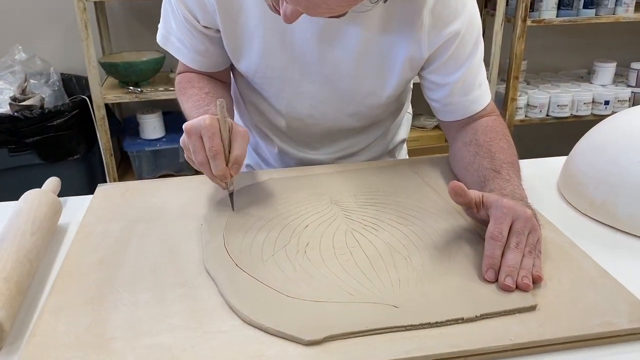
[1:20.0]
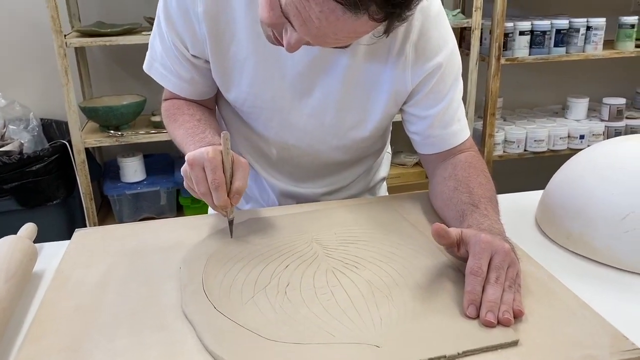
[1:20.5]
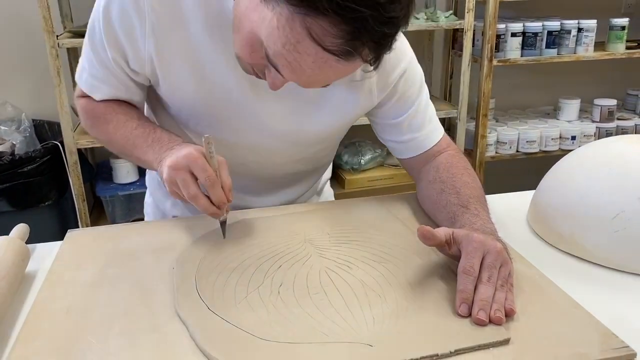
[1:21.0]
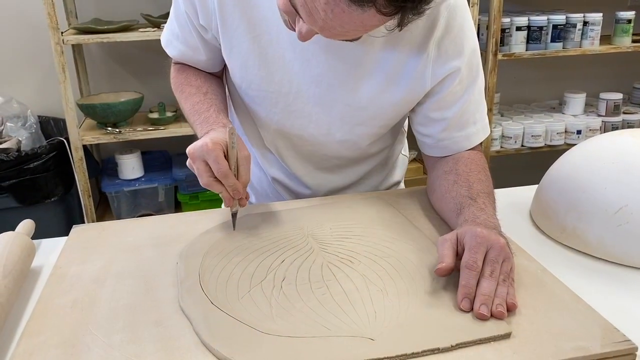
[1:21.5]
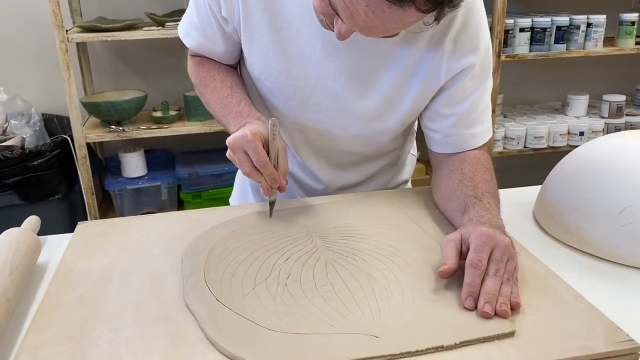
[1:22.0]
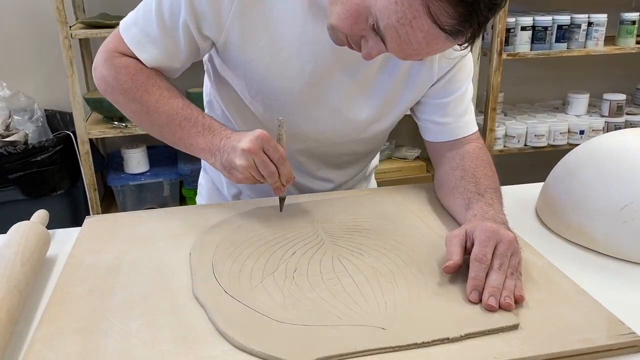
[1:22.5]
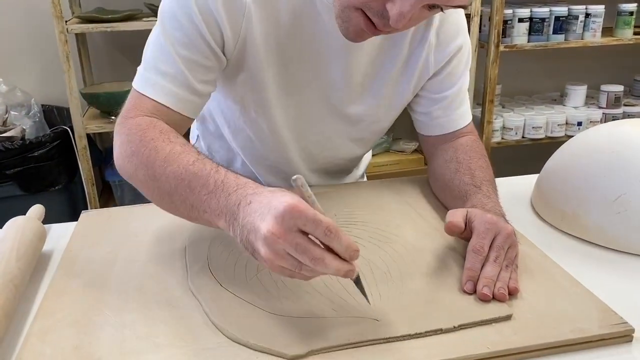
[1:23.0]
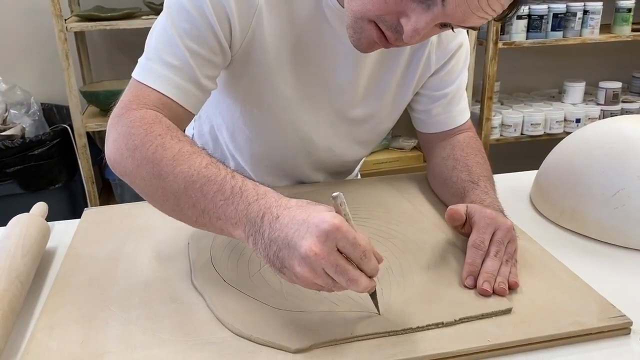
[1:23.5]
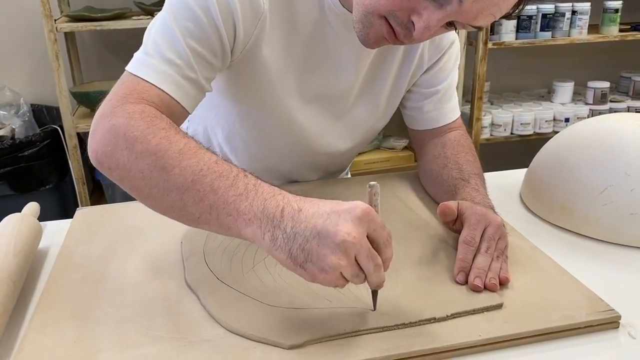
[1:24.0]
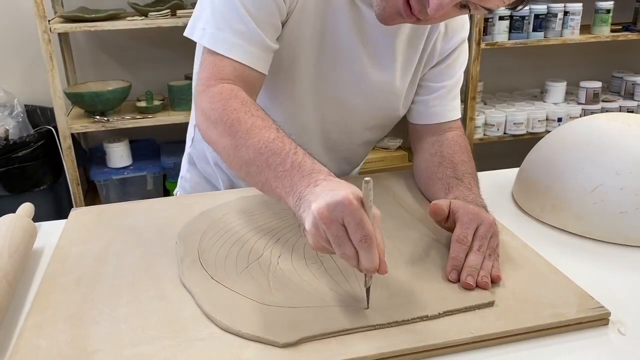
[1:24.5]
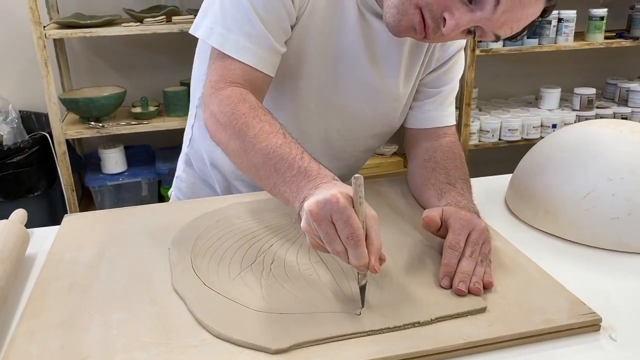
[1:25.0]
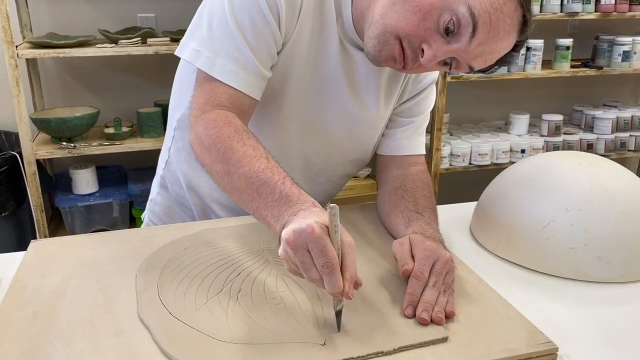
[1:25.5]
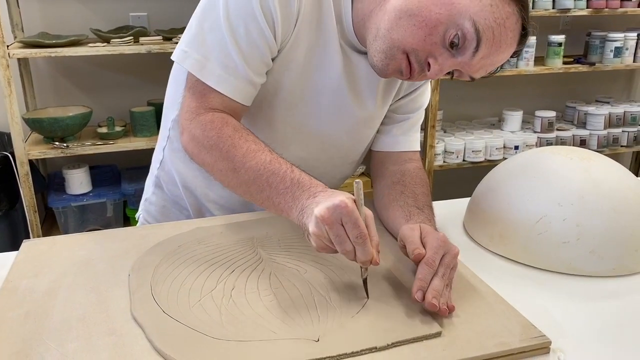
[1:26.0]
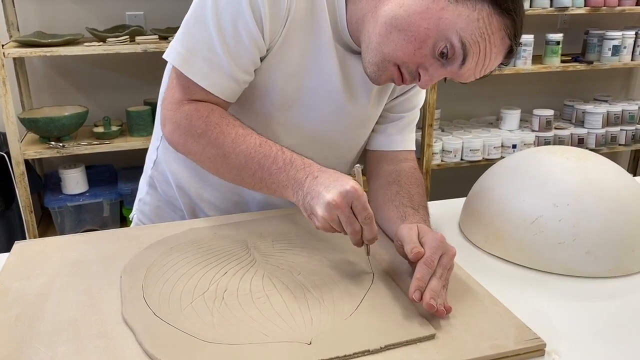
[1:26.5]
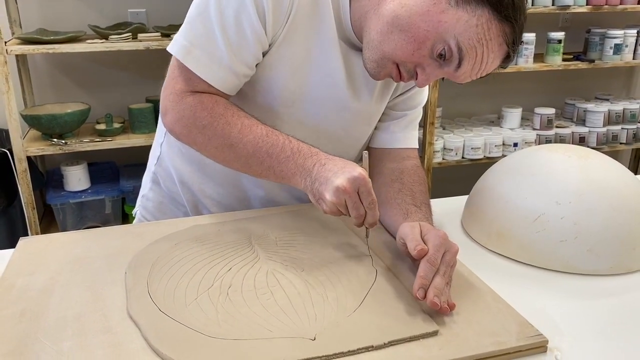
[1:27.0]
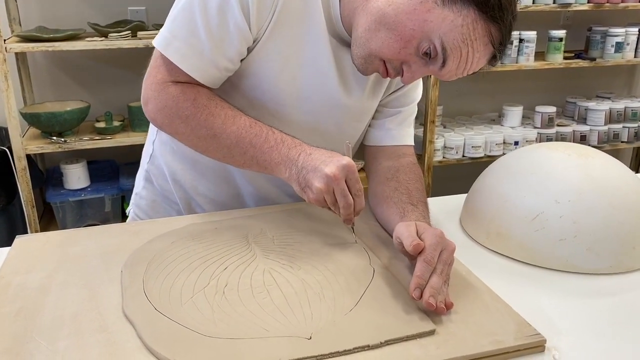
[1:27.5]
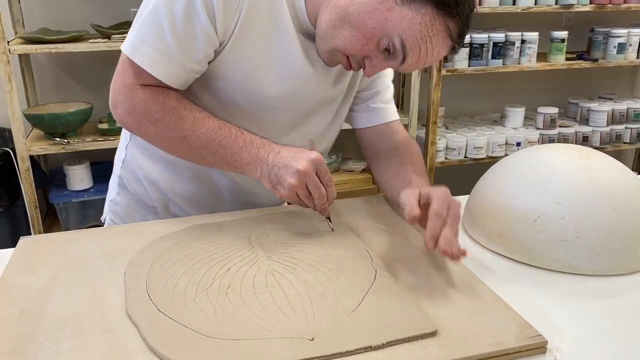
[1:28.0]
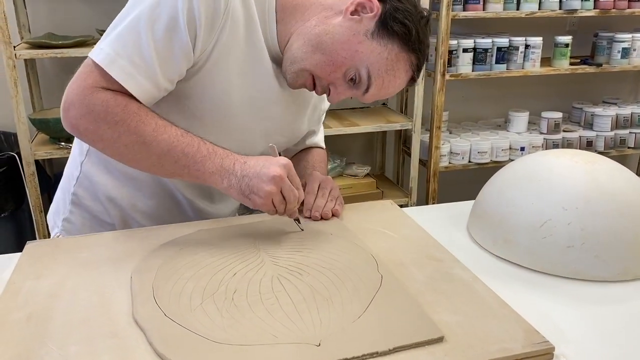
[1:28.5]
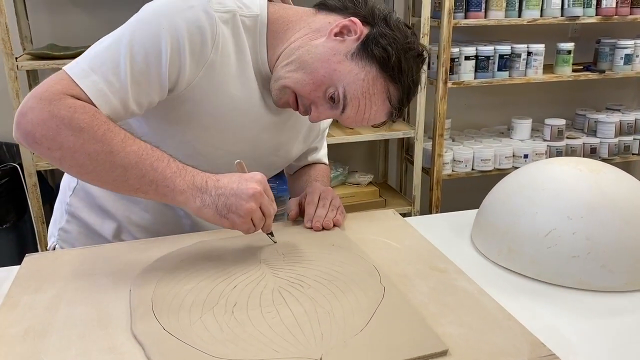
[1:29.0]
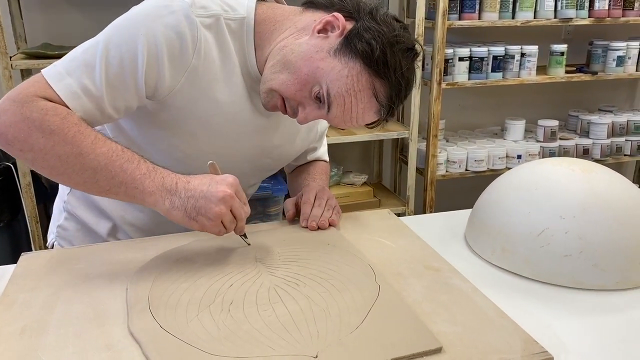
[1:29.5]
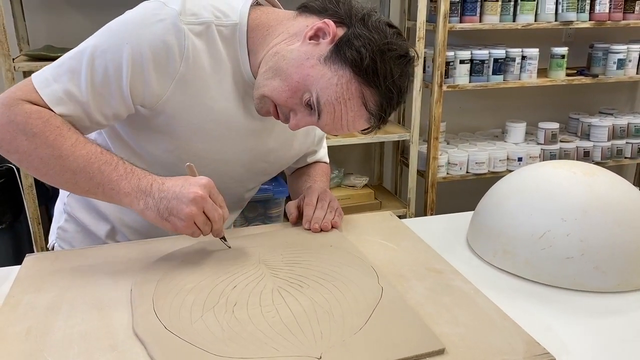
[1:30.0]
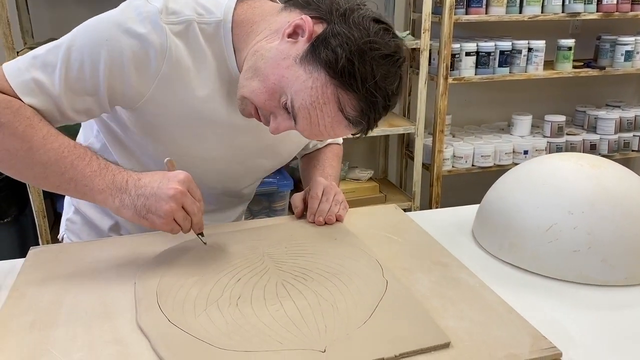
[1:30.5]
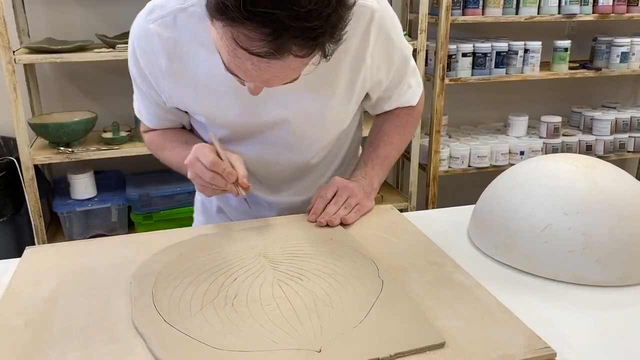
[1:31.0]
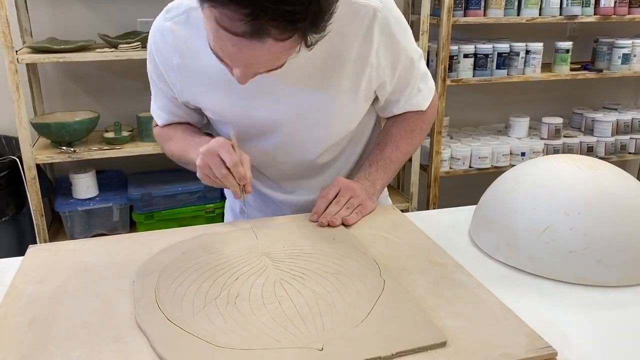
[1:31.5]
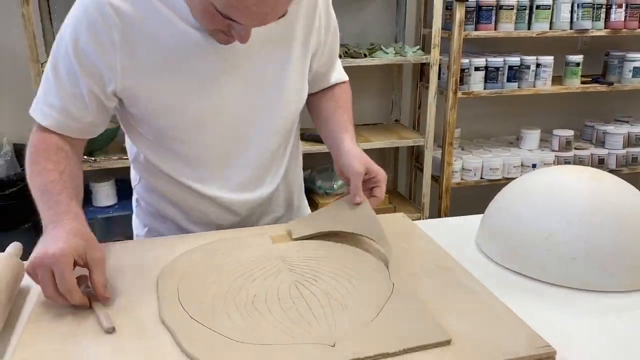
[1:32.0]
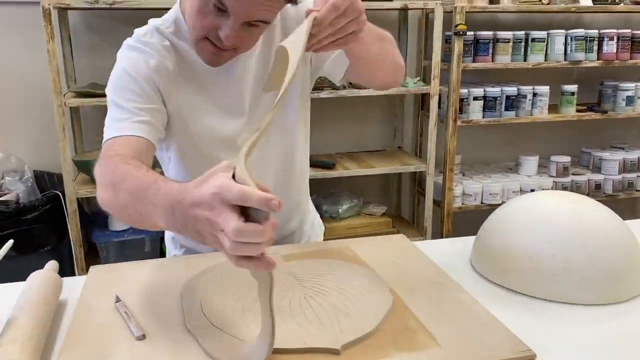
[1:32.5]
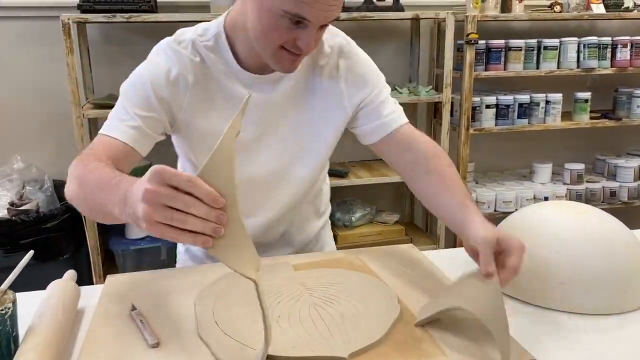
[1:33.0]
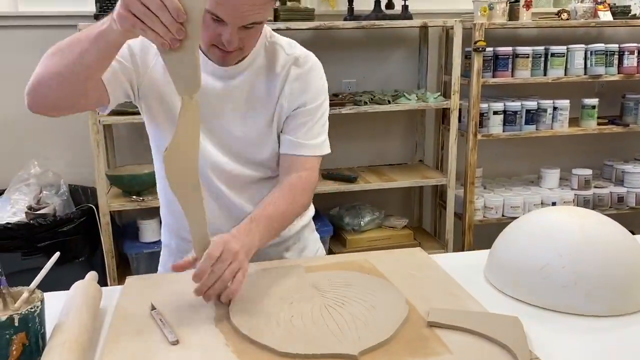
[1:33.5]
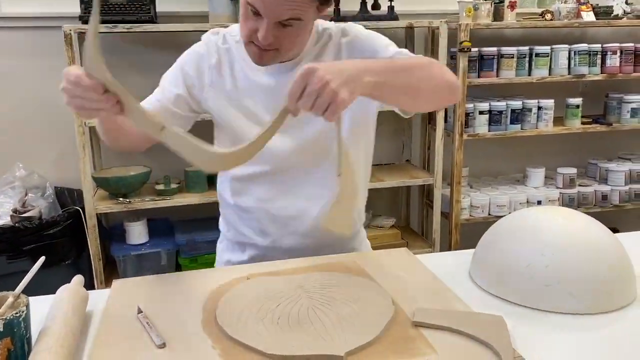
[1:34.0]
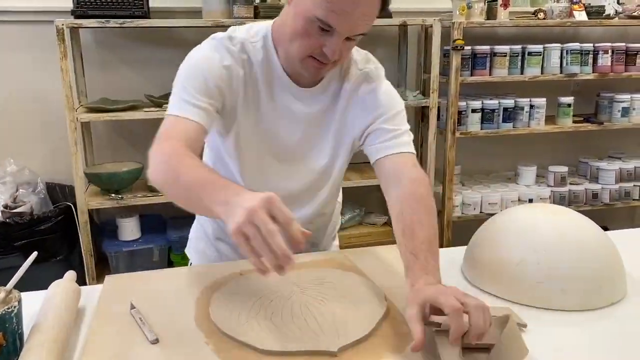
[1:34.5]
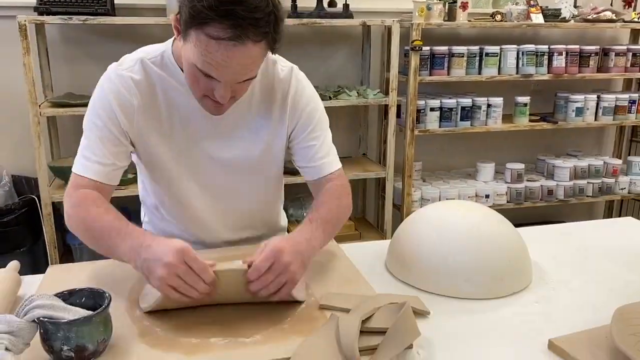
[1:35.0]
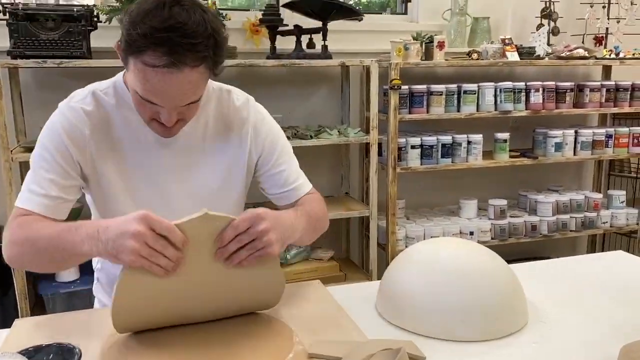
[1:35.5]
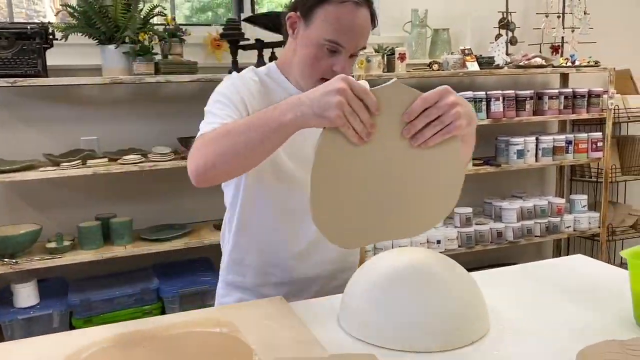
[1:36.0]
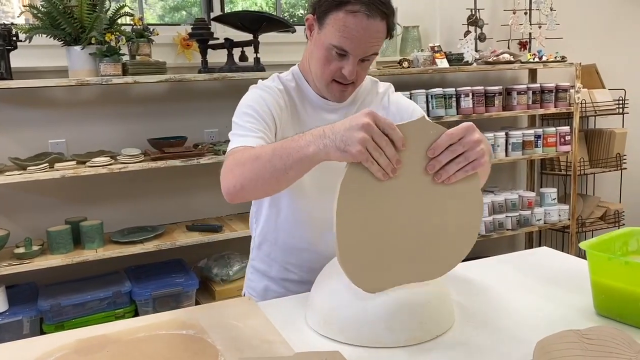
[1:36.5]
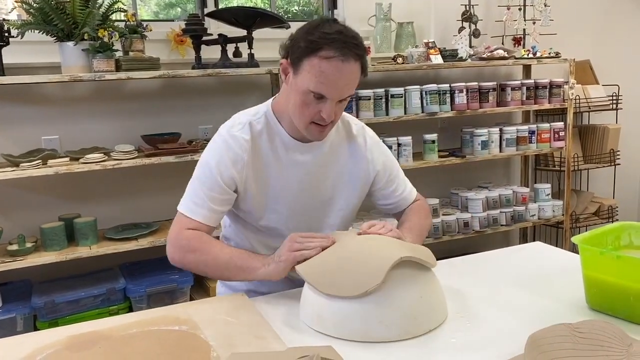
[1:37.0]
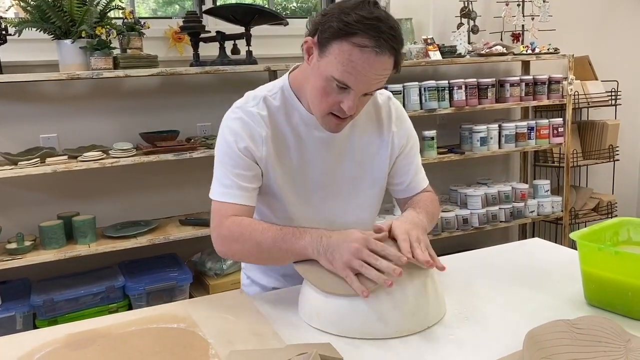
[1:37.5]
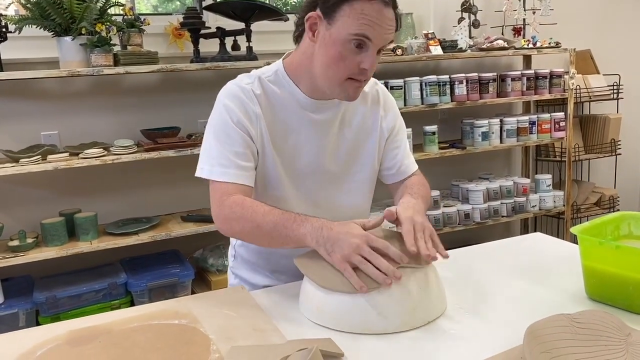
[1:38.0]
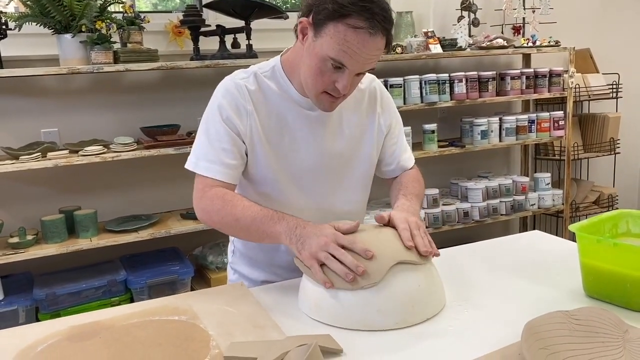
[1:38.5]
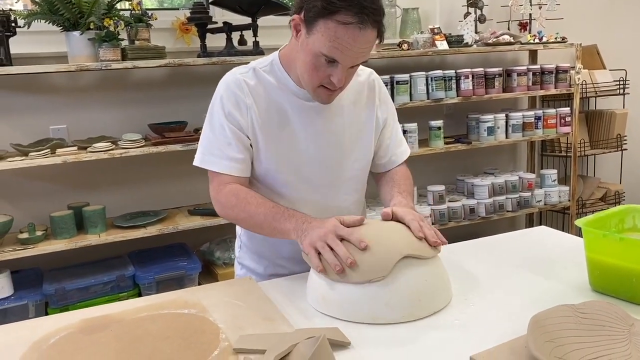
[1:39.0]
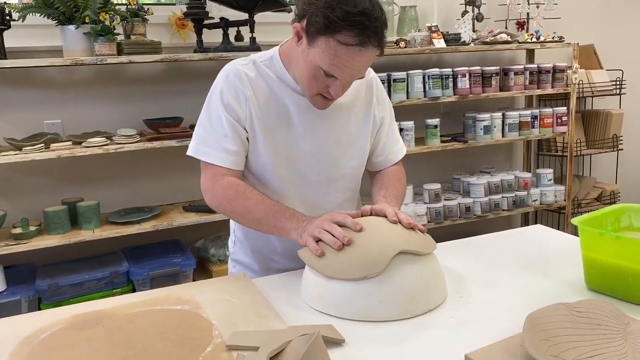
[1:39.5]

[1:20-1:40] Holding the sharp scalpel in his right hand, the man continues around the outline, focused on cutting it out accurately. Halfway around the leaf he stops at the bottom, then starts again from the top and works around the opposite side, cutting toward the bottom of the leaf. Once the outline is completely cut, he uses both hands to remove the outside edges and discard the extra putty. He lifts the leaf shape with both hands and moves it to his left side, where a raised half-circle structure is sitting on the table. He places the tan putty leaf on top of this structure with both hands and gently pats it down onto its surface.